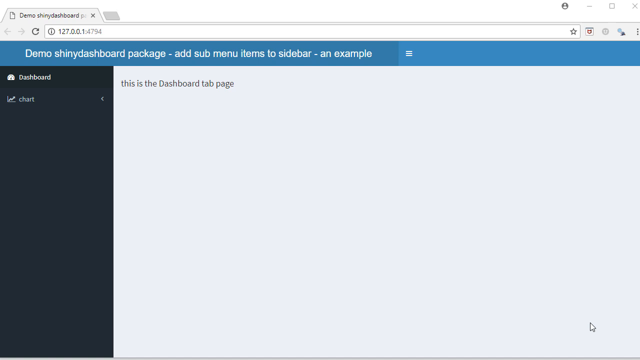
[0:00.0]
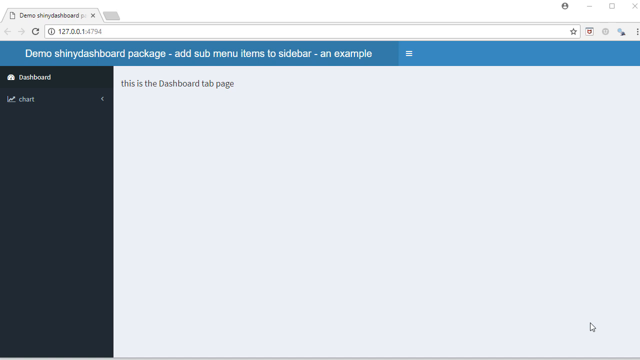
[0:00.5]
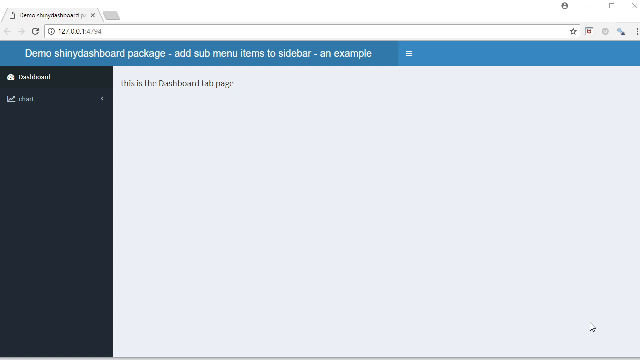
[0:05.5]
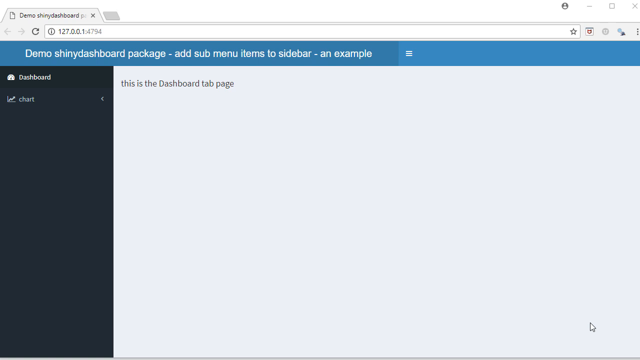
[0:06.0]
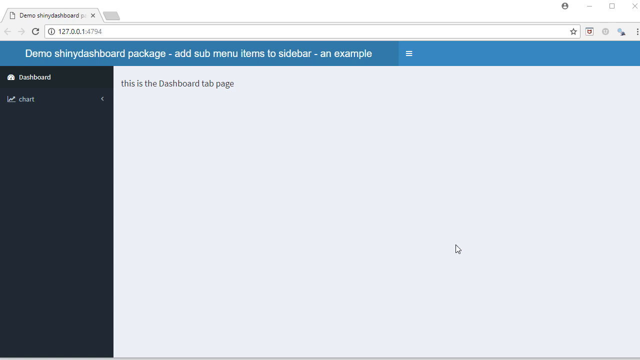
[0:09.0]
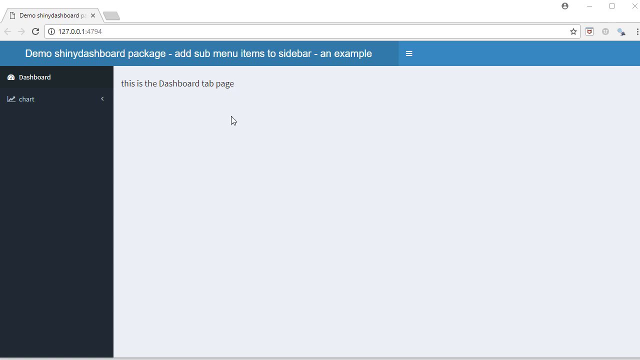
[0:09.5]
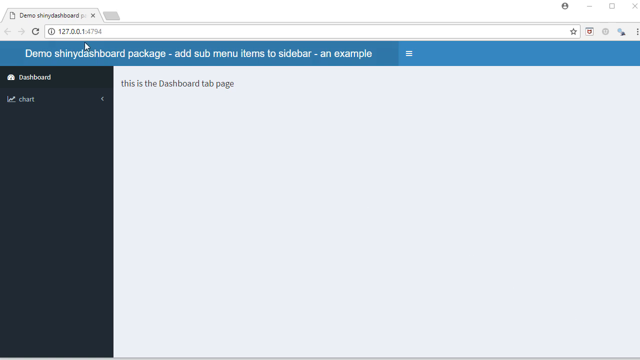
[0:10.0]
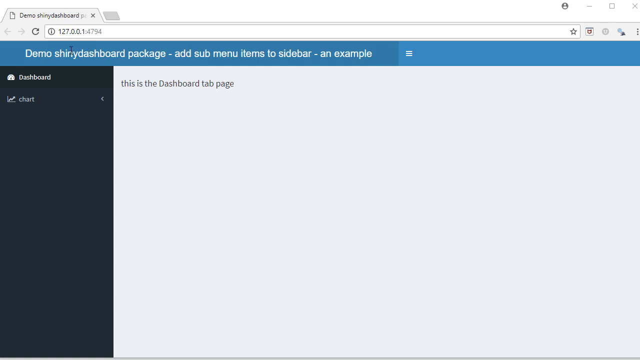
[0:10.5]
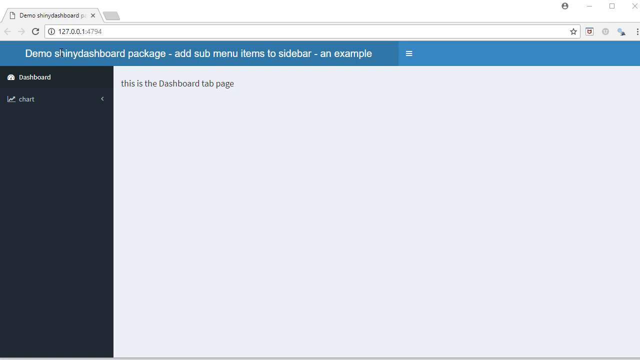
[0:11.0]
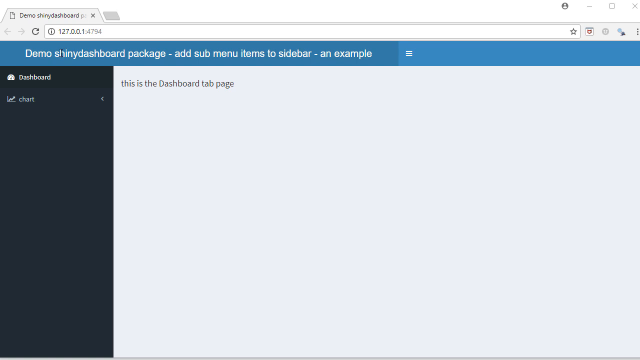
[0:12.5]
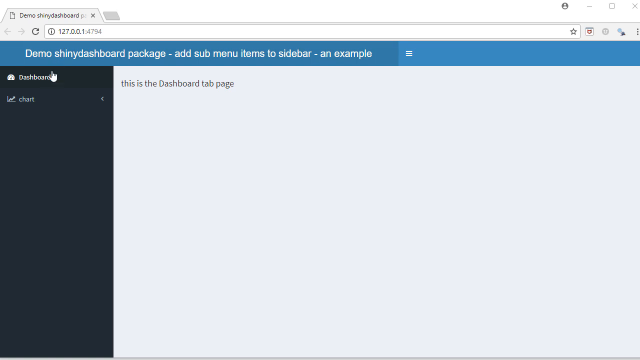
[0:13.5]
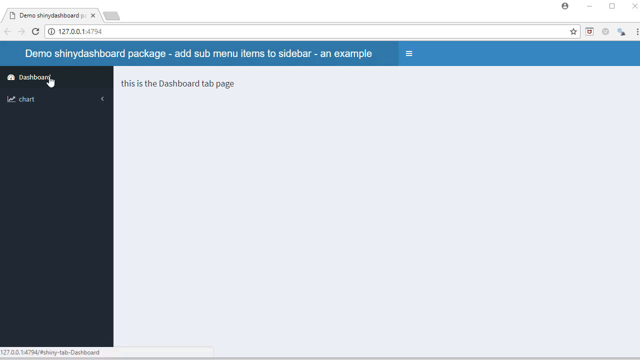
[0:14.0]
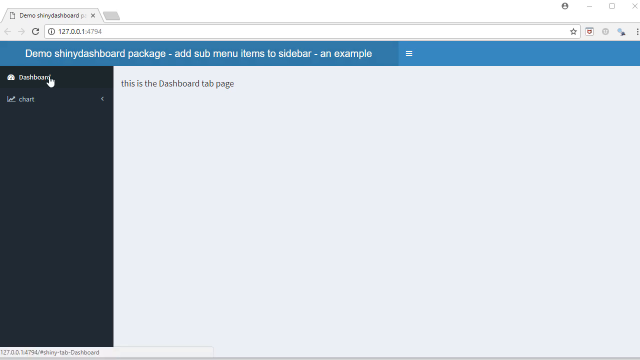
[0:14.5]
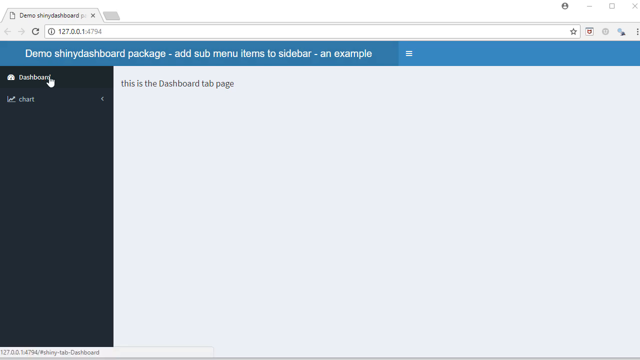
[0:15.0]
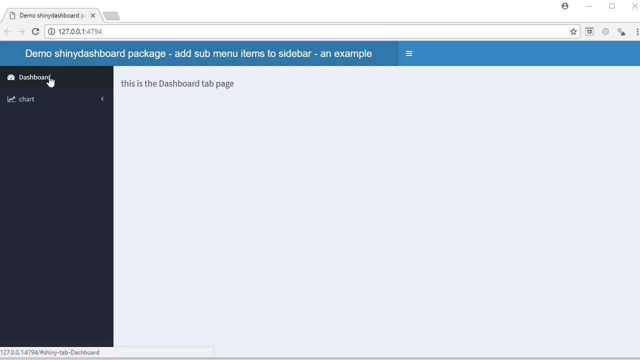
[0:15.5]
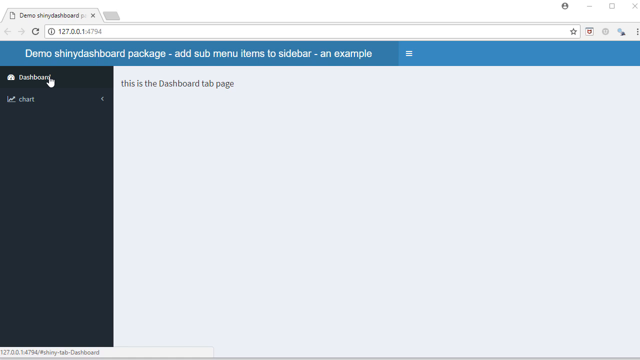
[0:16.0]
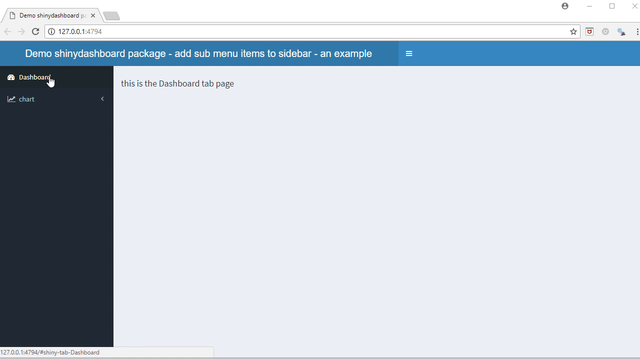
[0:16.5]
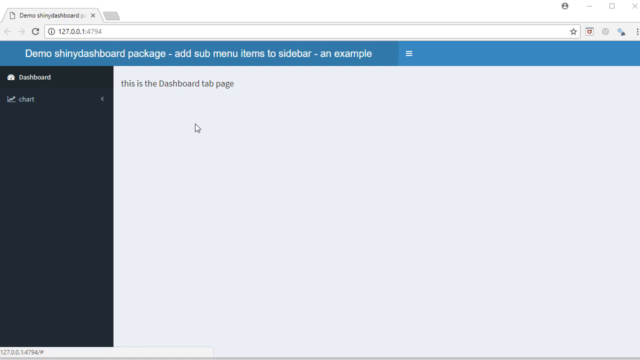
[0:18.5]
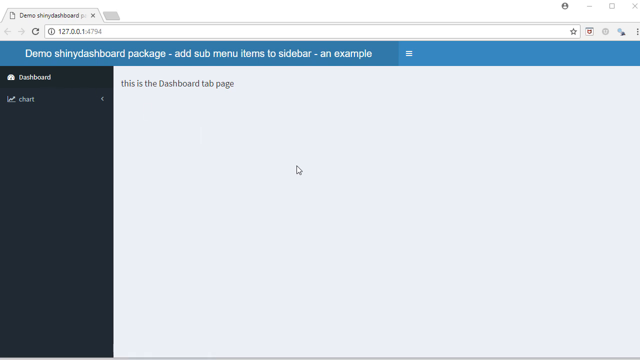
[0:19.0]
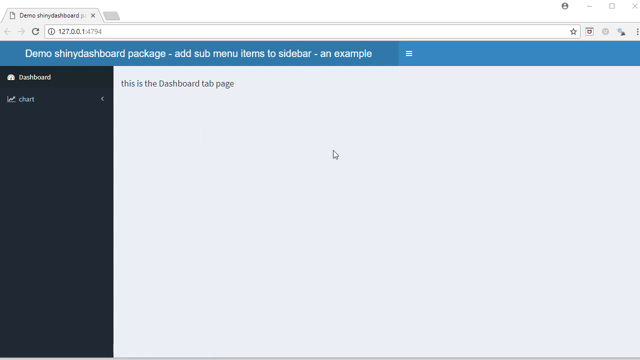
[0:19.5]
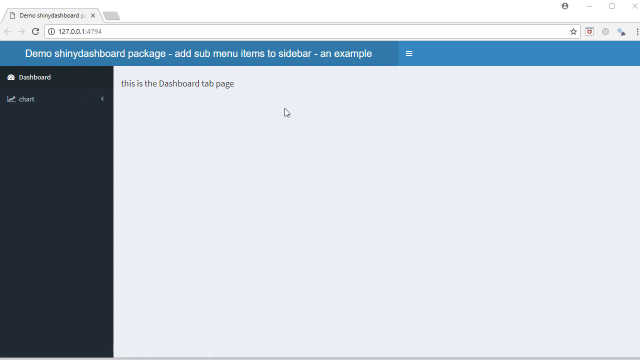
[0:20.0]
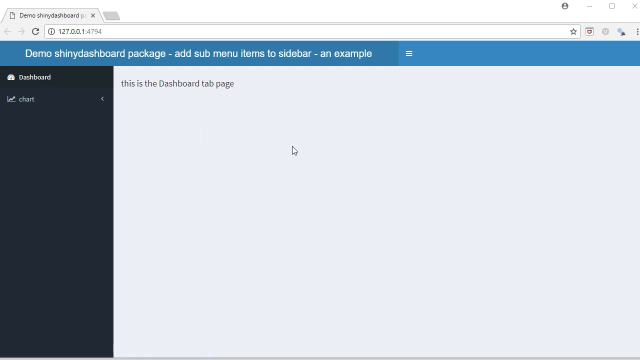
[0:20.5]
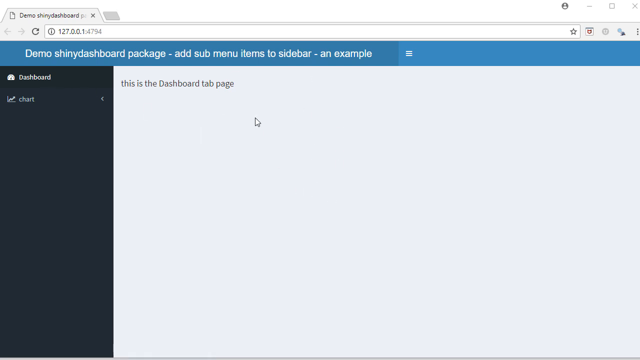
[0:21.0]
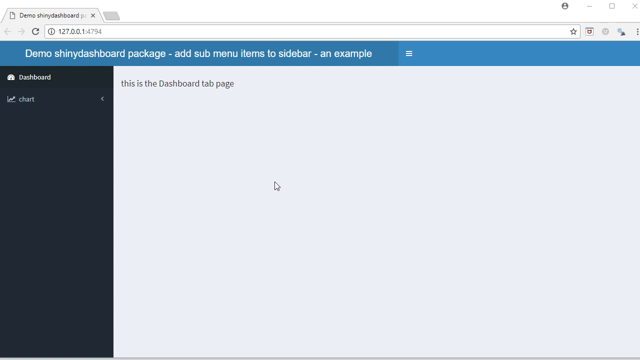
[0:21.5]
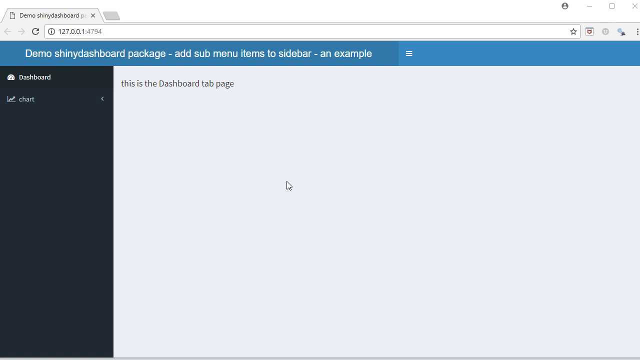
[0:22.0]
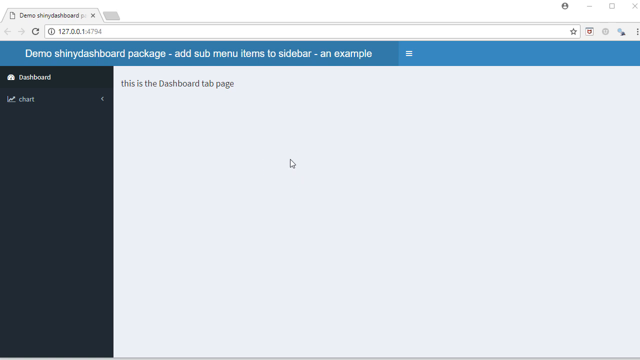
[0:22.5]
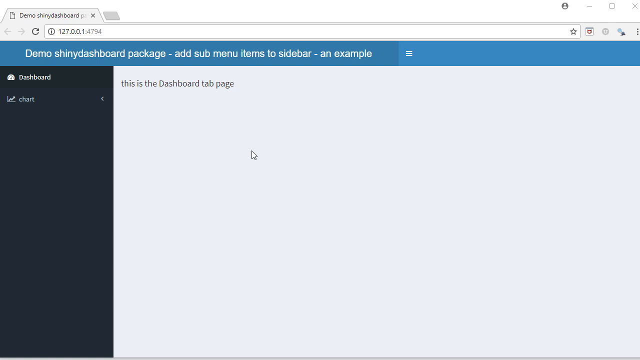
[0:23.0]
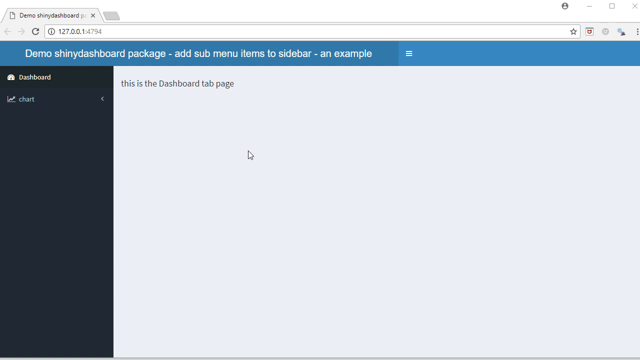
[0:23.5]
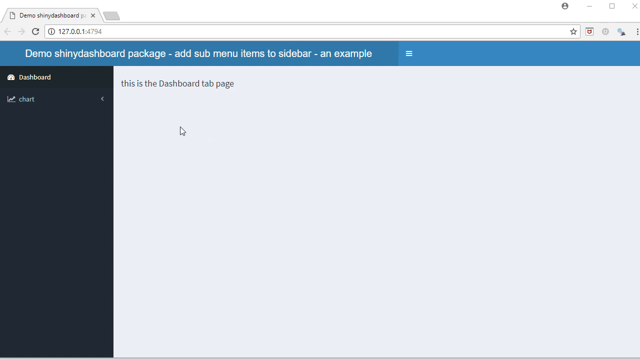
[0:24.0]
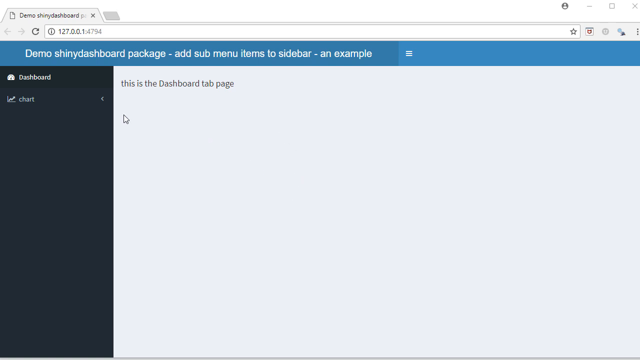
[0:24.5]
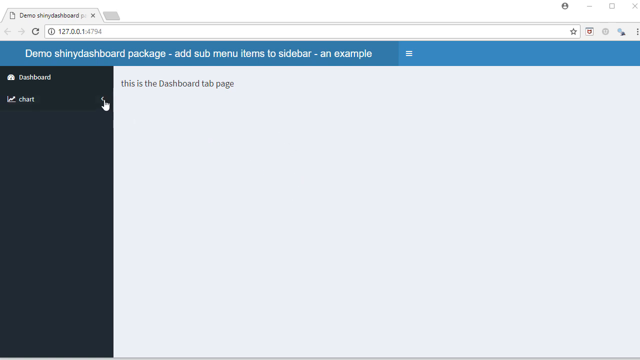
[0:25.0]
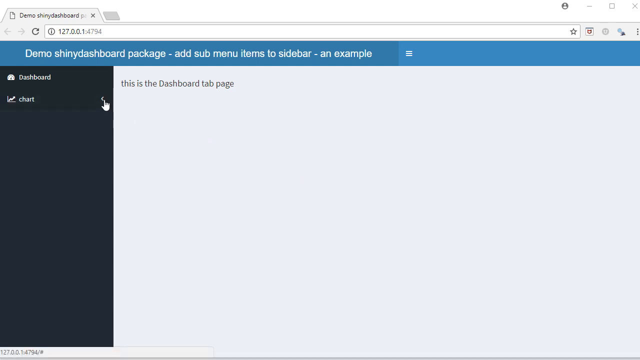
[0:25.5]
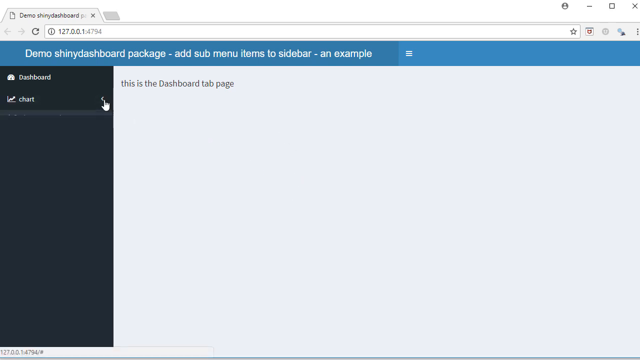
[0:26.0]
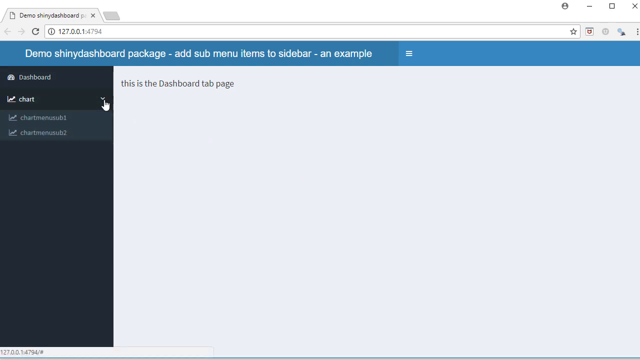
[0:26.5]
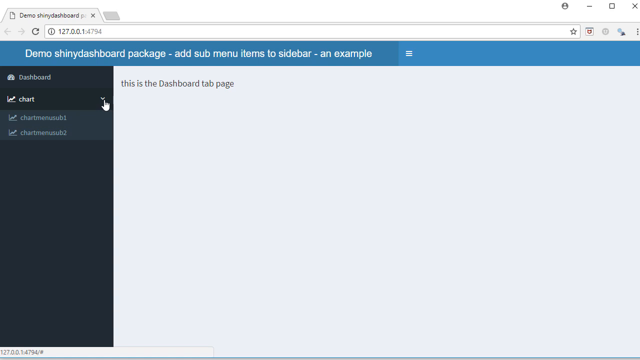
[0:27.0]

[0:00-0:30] White makes up about three-quarters of the screen, and at the very top on the left it reads "this is a dashboard tab page." The left quarter of the page has a black backdrop, with "dashboard" in the upper left and "chart" right underneath it. Across the very top runs a slight blue strip with white lettering that reads "demo, shiny dashboard package, add submenu item to the sidebar, an example." The cursor moves over "dashboard" and looks as if it is about to click but does not; instead it circles around repeatedly. The cursor goes back to "chart" and clicks it, and two items pop up underneath, apparently chart one and chart two with another word in between. The mouse moving back and forth is the only action on the screen.